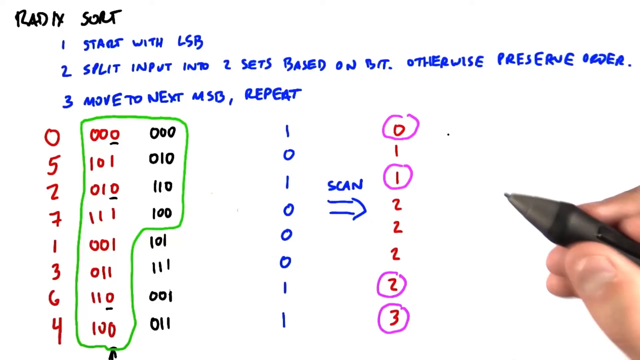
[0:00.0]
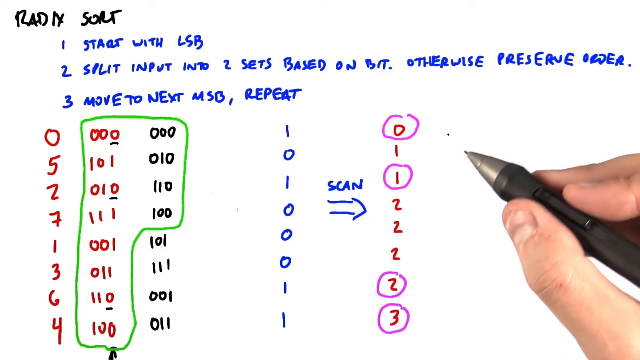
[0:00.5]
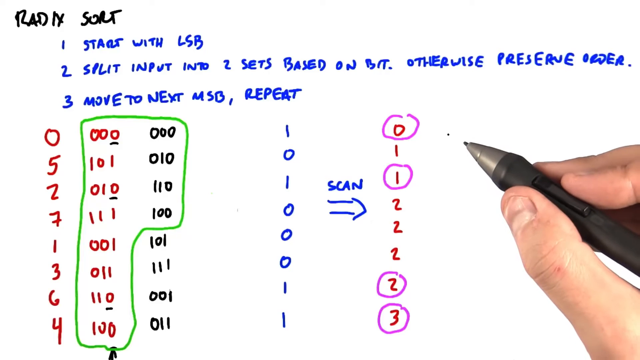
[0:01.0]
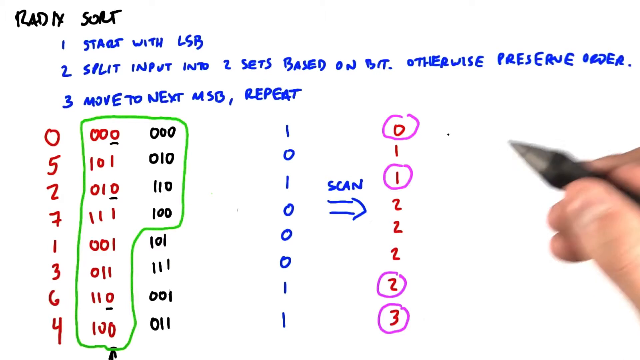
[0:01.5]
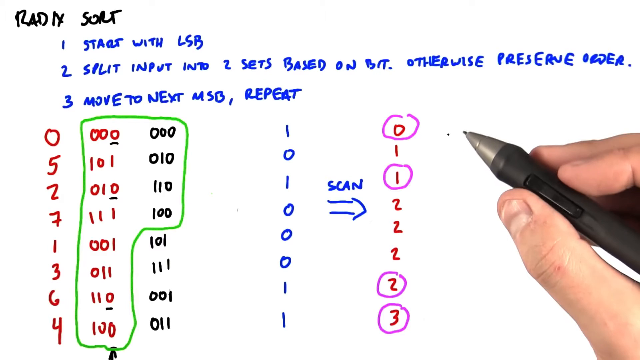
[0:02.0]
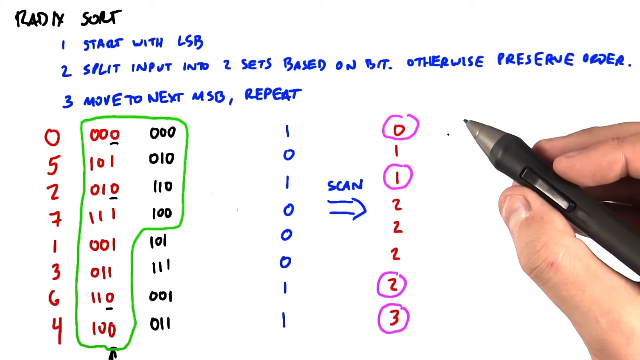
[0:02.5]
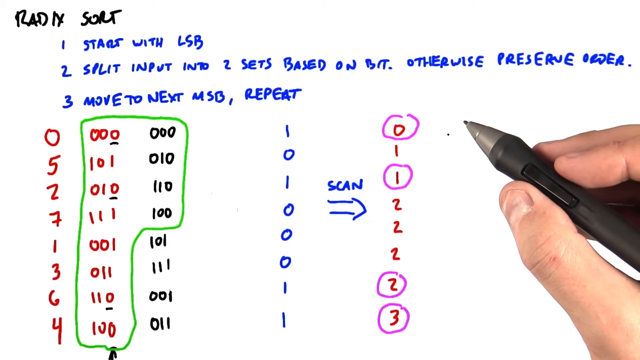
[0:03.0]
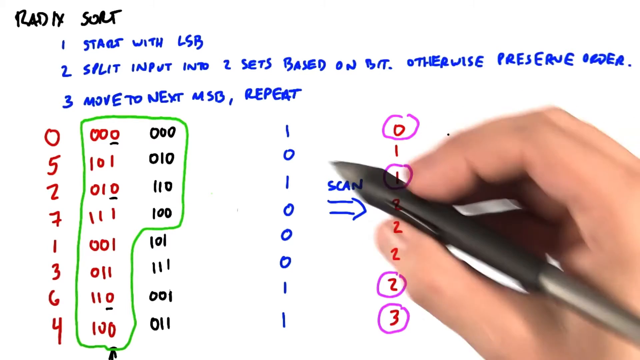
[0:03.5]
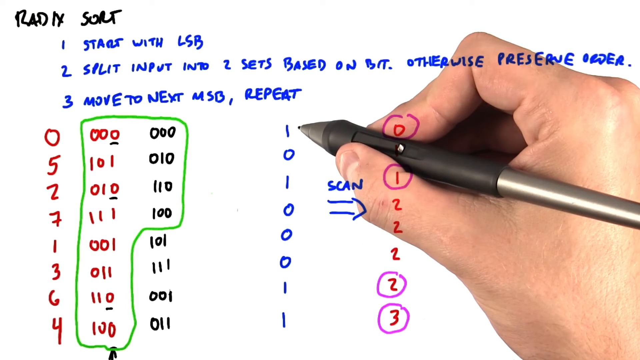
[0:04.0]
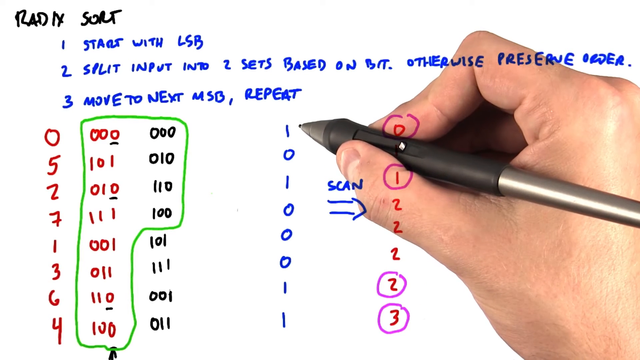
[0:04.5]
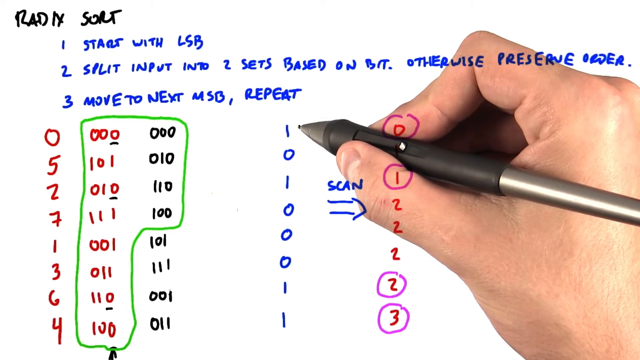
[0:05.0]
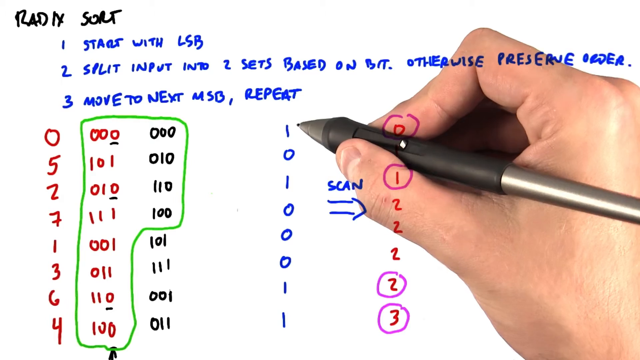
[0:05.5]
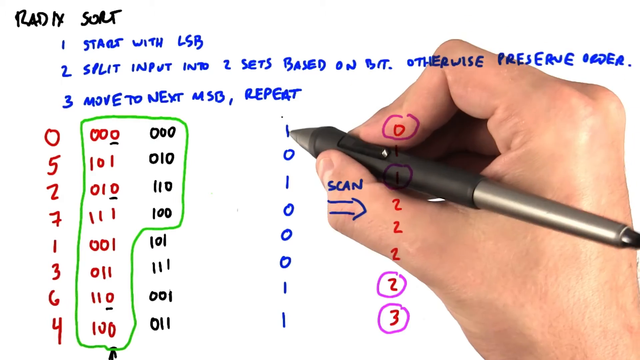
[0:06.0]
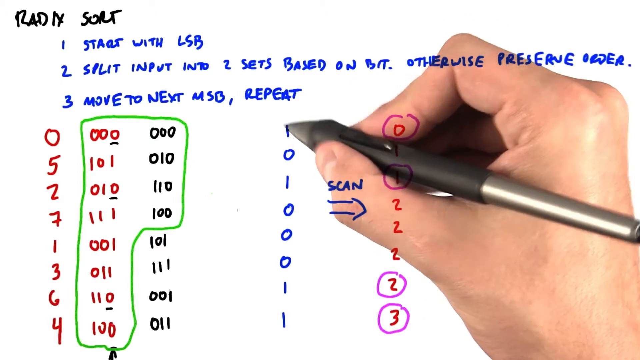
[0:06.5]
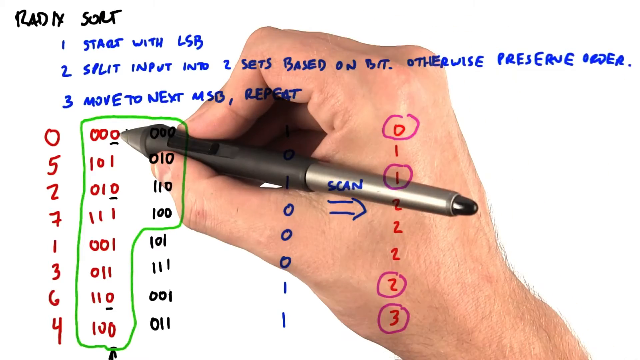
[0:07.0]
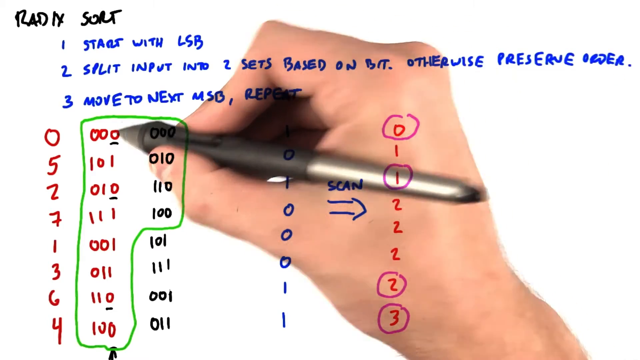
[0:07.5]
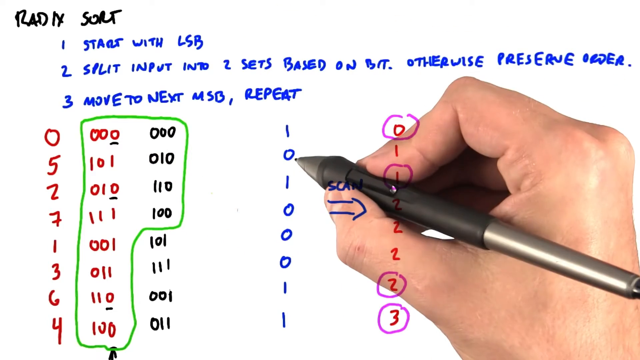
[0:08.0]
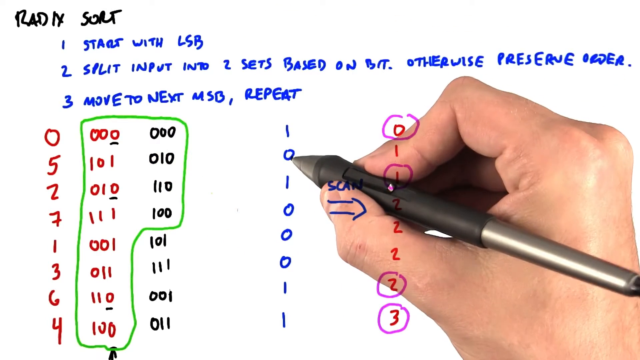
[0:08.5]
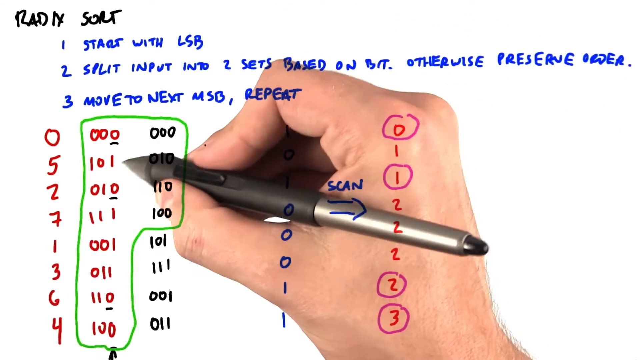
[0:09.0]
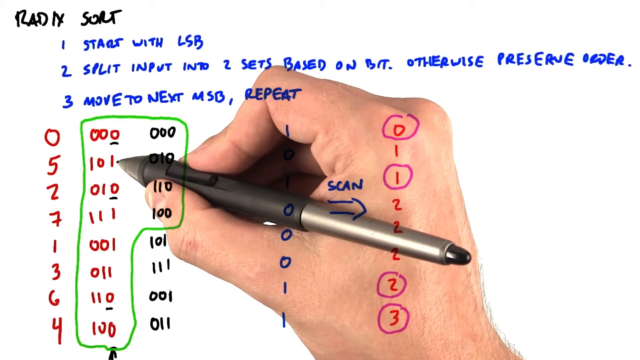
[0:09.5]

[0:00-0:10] A person is doing math on a screen, moving their hand around on the screen while holding a pen that is also a stylus. The writing on the screen is in blue, black, red, and pink. Several numbers are circled in pink: red numbers in a column over to the right, where the 0, the 1, the 2, and the 3 are circled from top to bottom. To the very left of that column, the word "scan" is written in blue, with an arrow under it pointing over to the column of numbers on the right side of the screen.